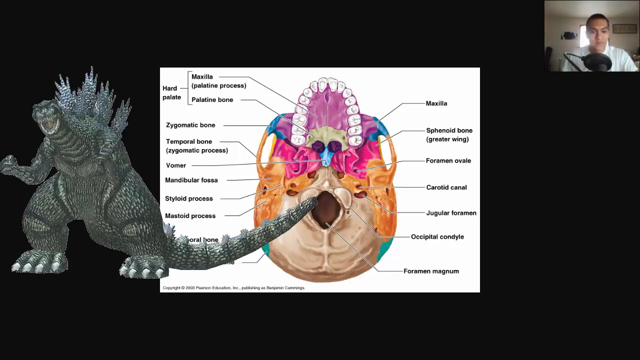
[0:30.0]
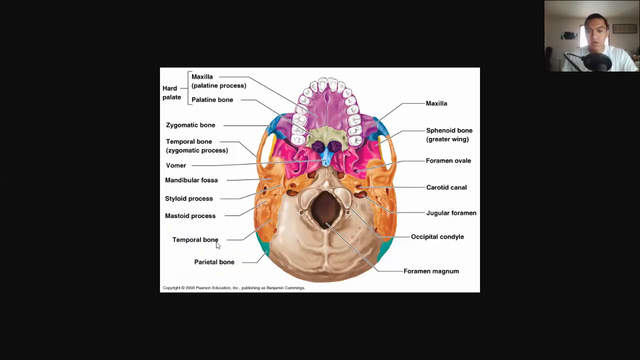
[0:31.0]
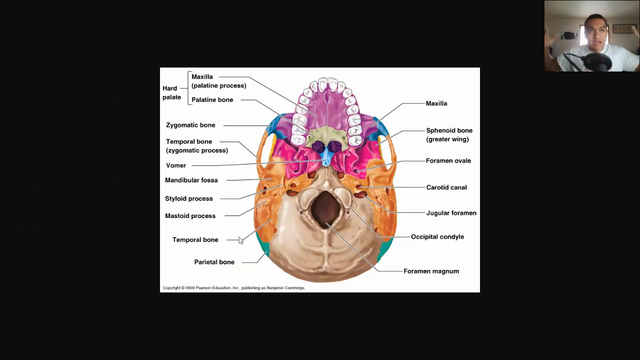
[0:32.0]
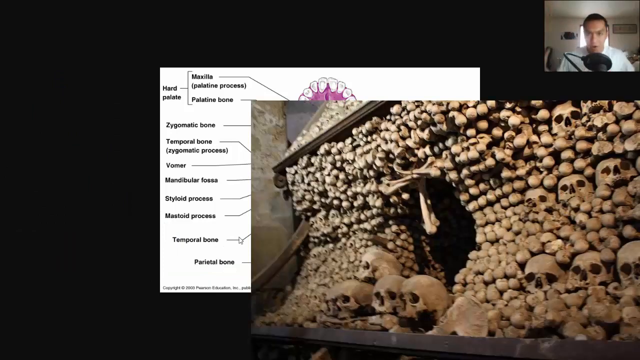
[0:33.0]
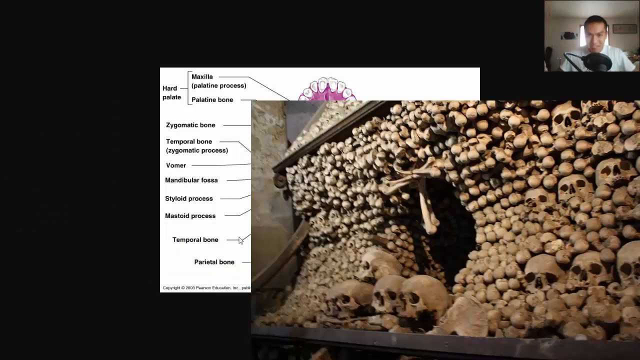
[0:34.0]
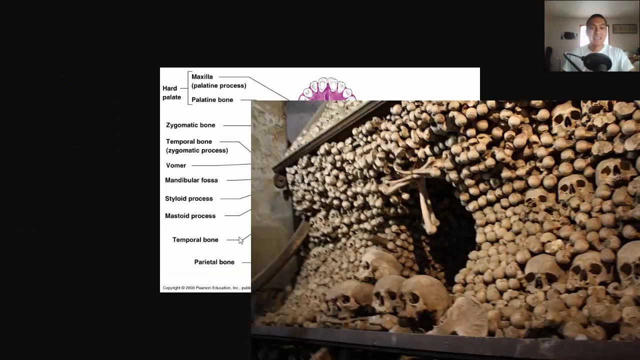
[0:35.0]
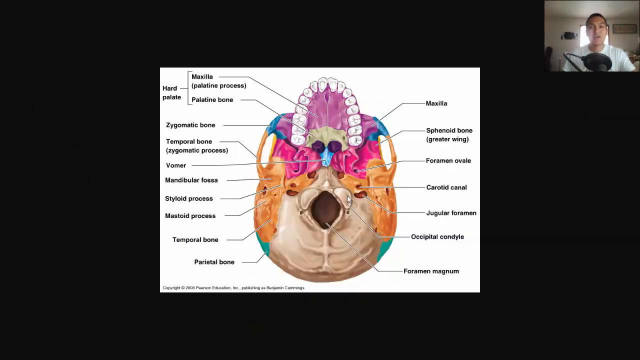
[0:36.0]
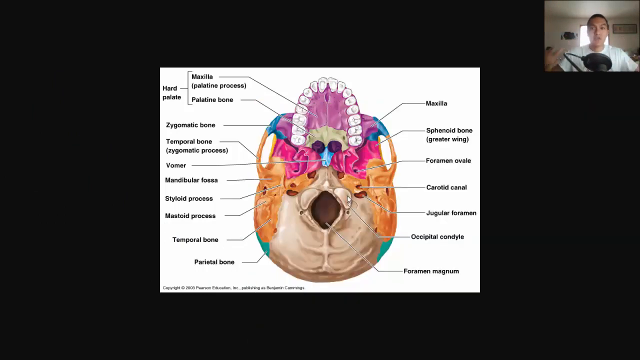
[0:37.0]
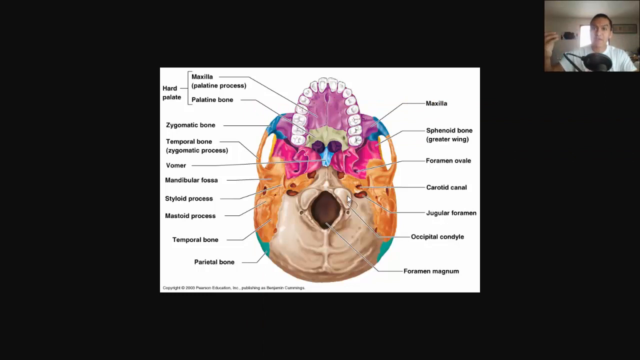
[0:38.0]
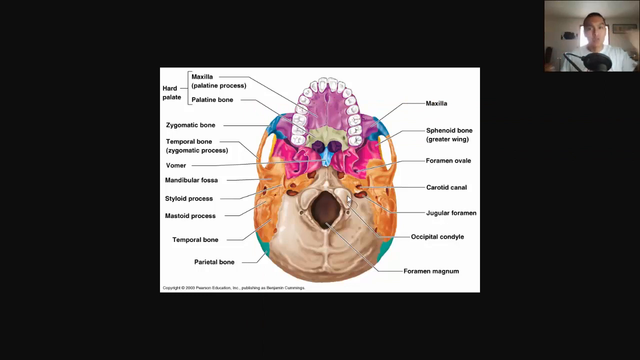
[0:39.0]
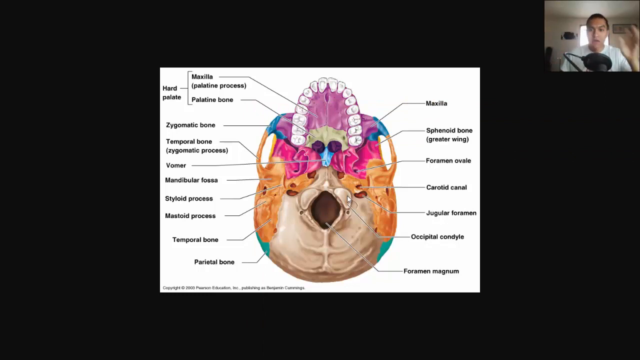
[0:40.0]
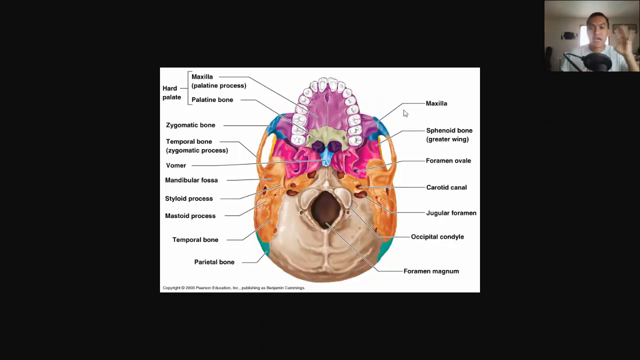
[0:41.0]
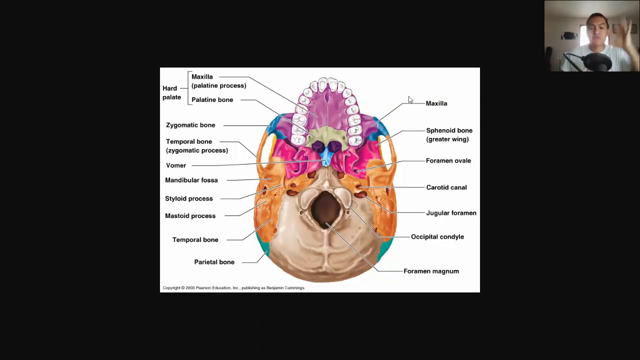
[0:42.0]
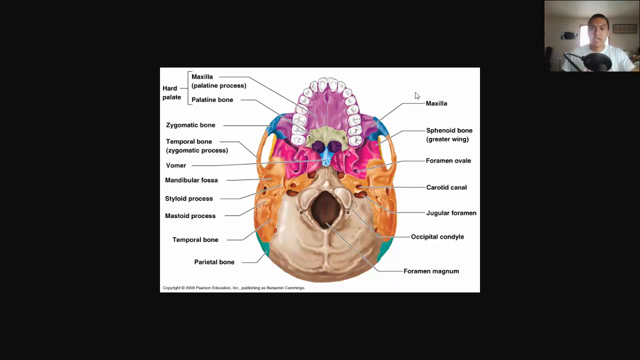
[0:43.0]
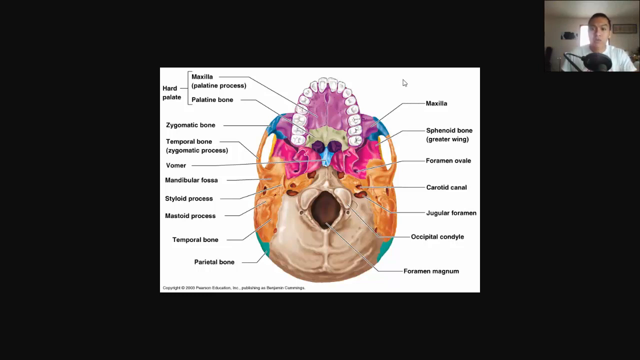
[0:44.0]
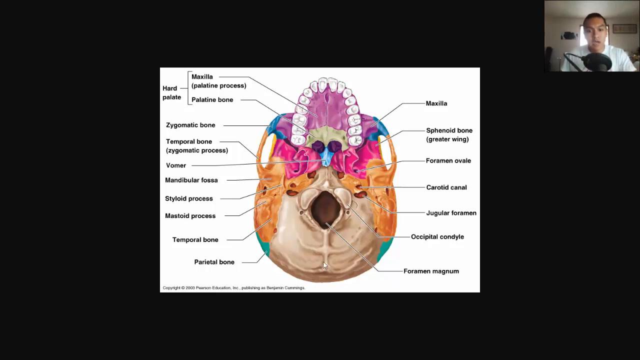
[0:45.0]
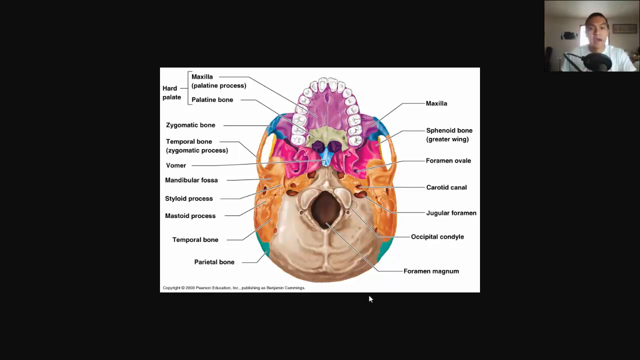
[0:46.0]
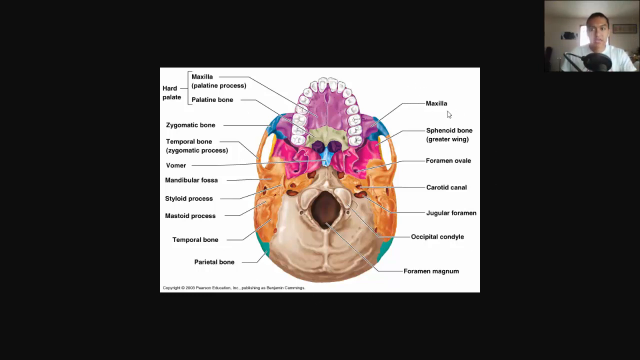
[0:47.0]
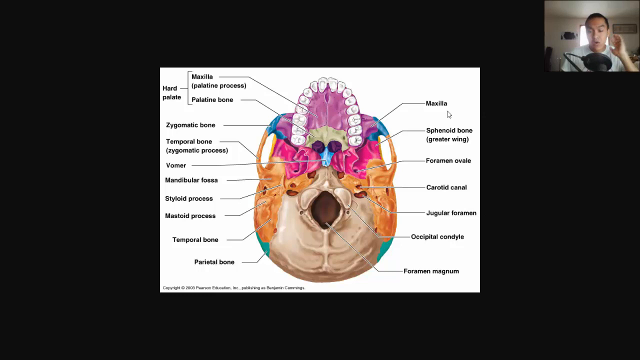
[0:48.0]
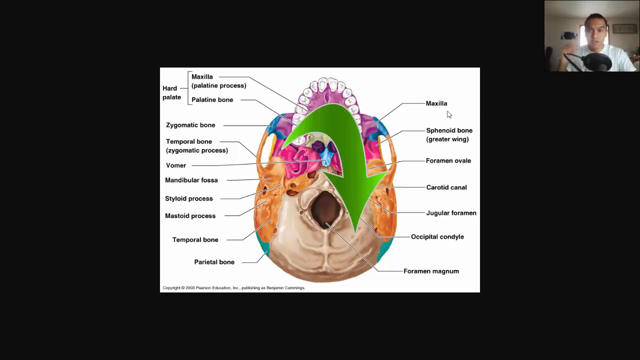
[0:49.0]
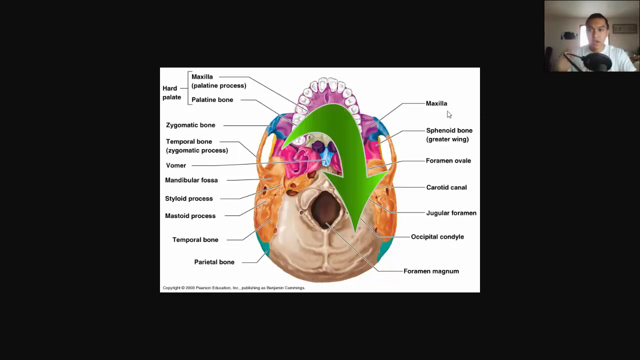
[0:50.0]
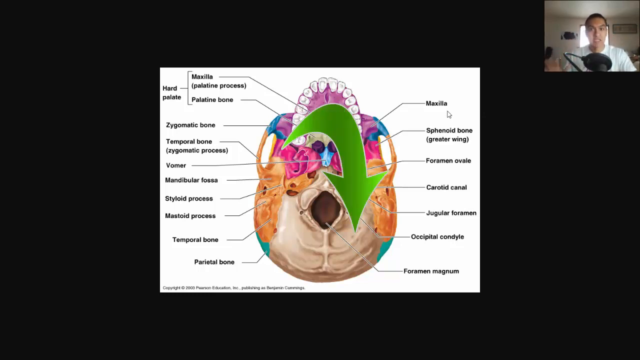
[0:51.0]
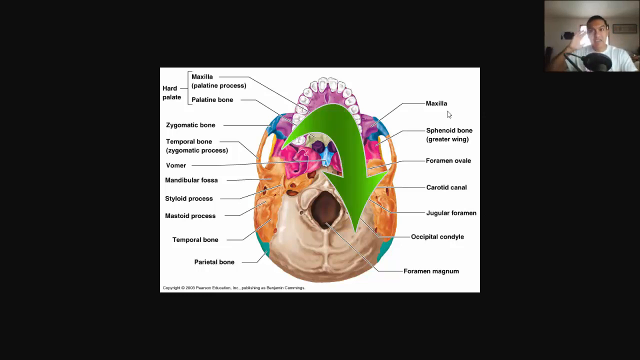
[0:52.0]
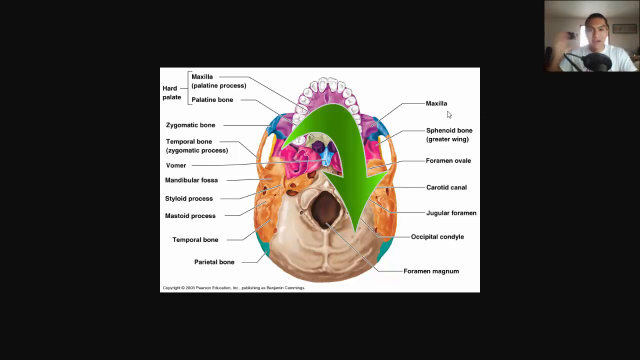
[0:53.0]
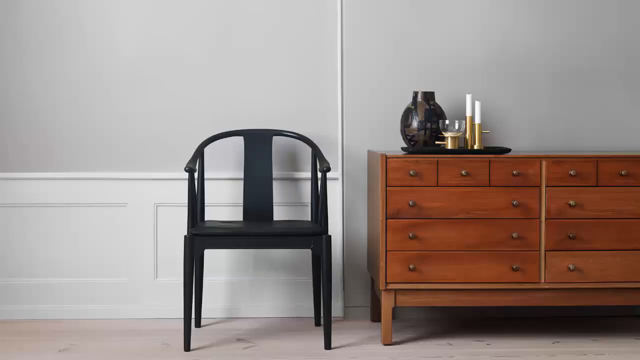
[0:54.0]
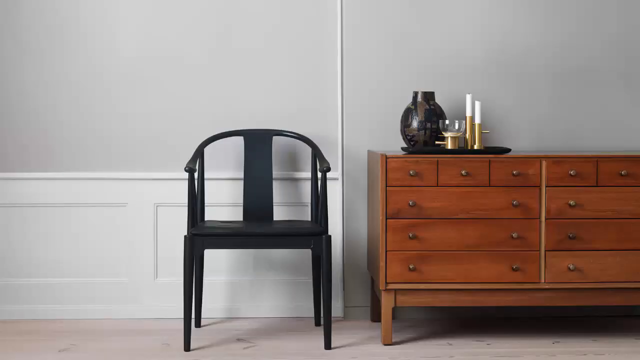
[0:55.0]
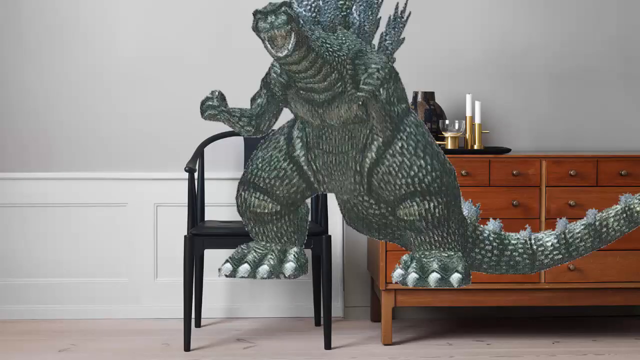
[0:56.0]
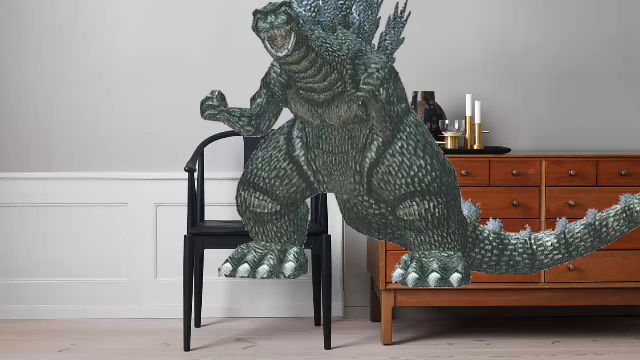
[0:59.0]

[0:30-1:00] The man continues to talk over a picture in the middle that looks to be the bottom part of a human skull, showing the bottom of the teeth and the mandible at the bottom, and the socket where the spine connects. A picture on the bottom right shows many skulls stacked and piled into a little crypt, forming almost a tunnel; the skulls all have a weird cream color. He moves his mouse cursor around, circling the skull. A green arrow pops up in the middle, pointing toward the viewer. The video then cuts to a completely different place with a chair and a dresser, and Godzilla appears really big in the middle of the screen.